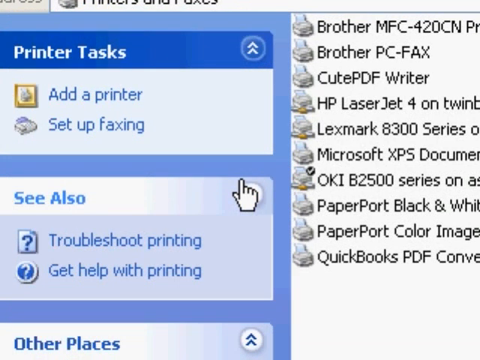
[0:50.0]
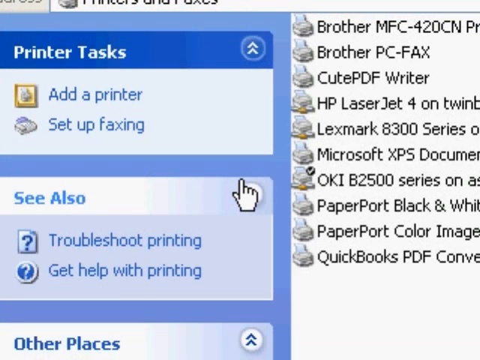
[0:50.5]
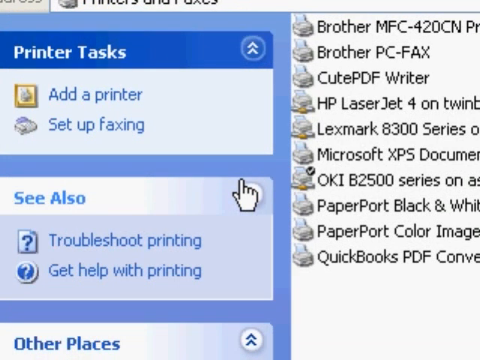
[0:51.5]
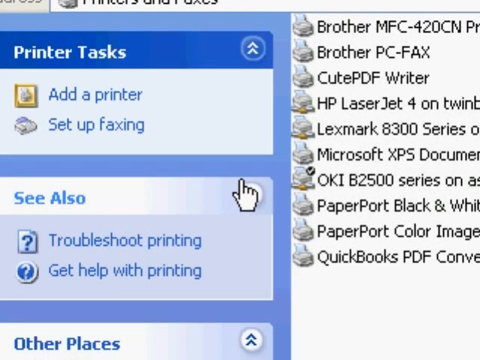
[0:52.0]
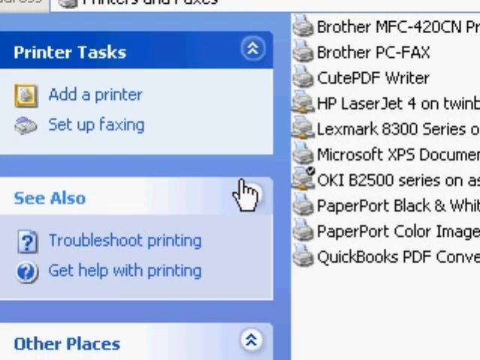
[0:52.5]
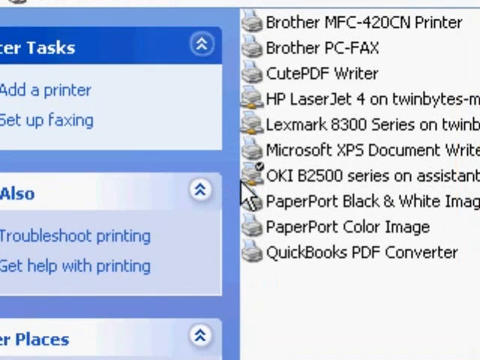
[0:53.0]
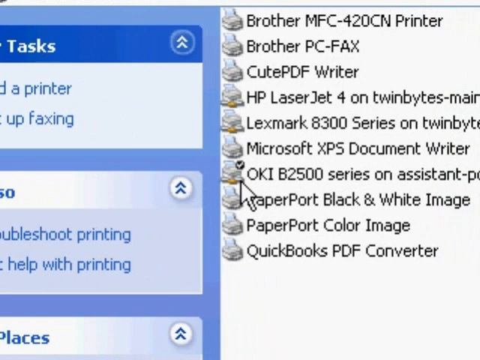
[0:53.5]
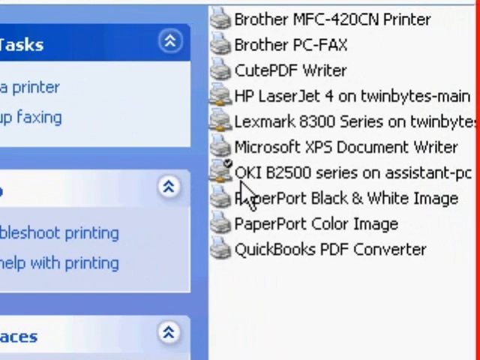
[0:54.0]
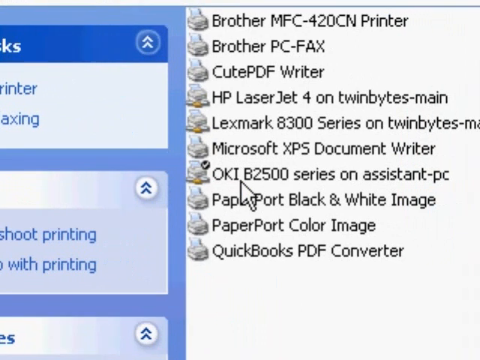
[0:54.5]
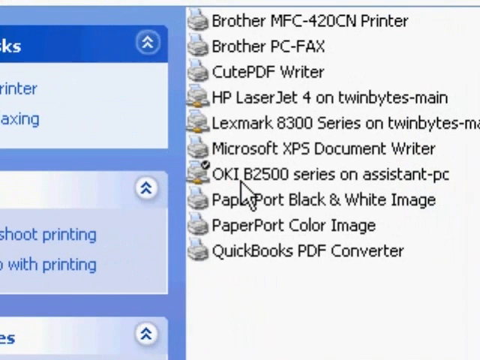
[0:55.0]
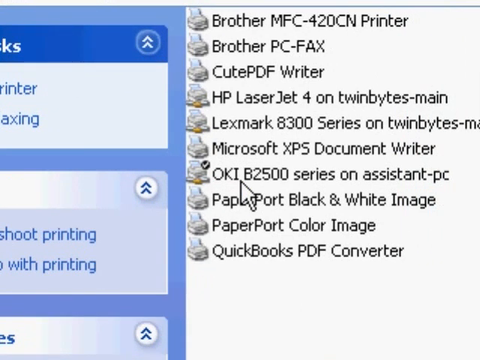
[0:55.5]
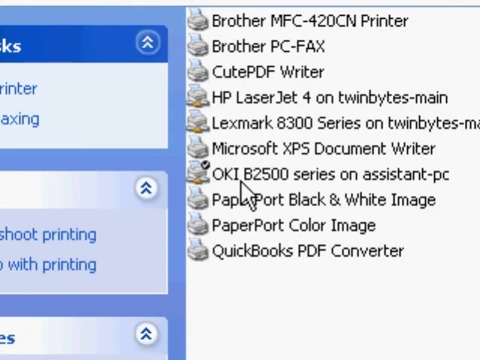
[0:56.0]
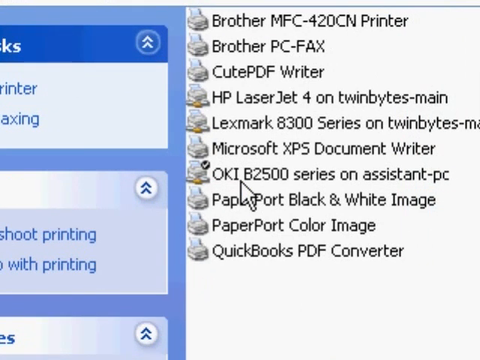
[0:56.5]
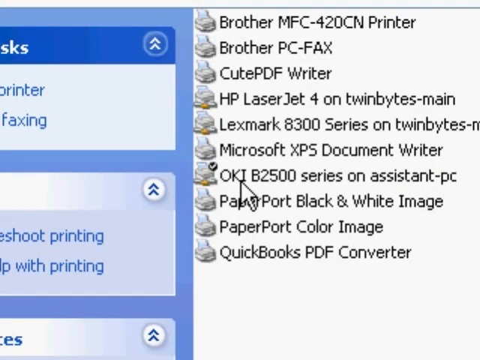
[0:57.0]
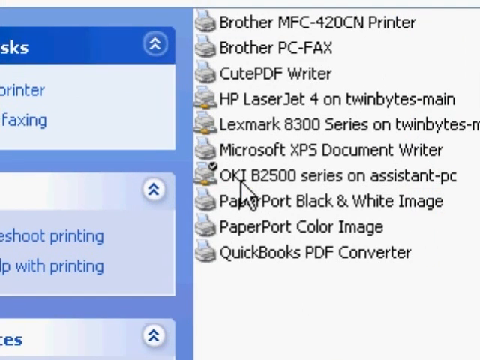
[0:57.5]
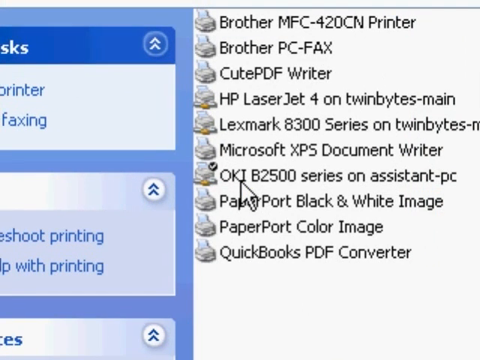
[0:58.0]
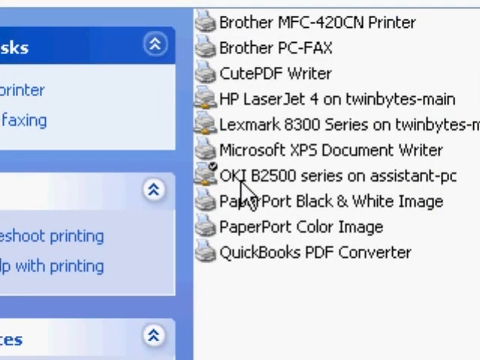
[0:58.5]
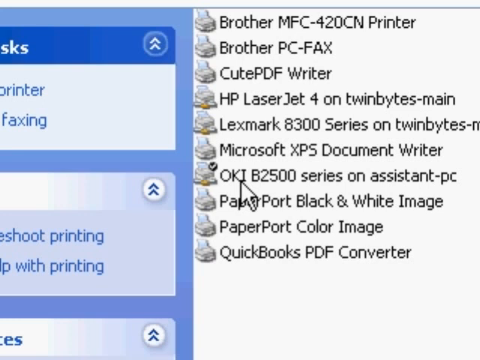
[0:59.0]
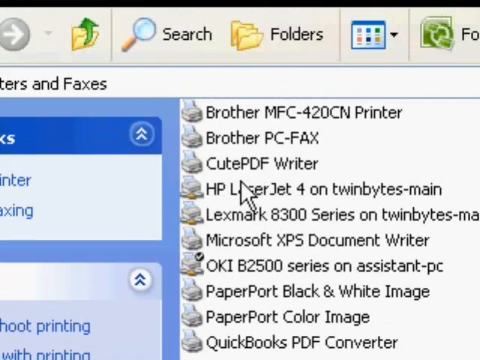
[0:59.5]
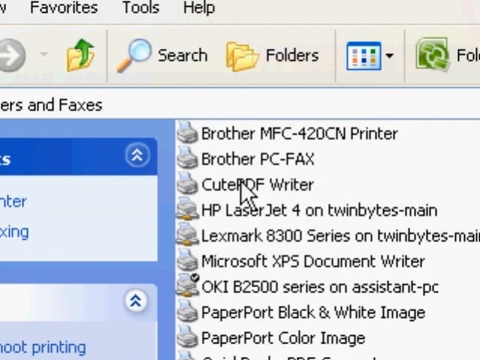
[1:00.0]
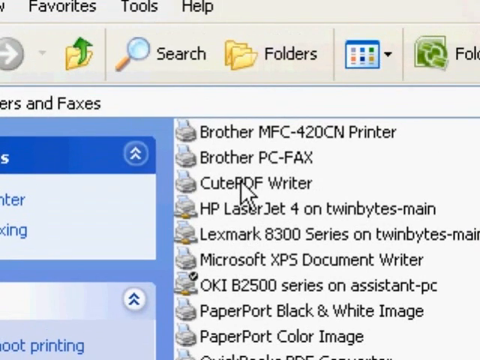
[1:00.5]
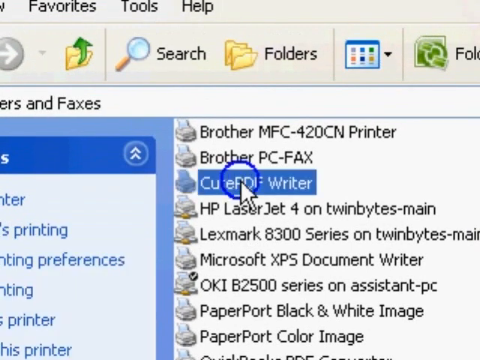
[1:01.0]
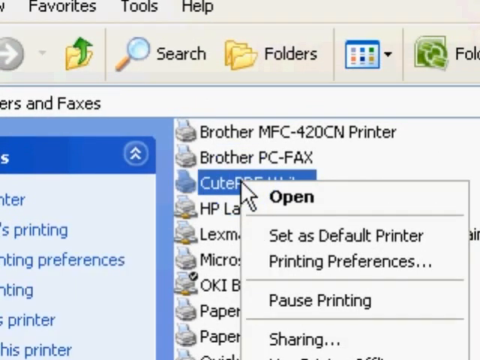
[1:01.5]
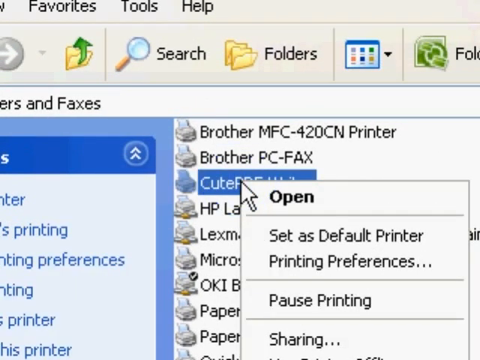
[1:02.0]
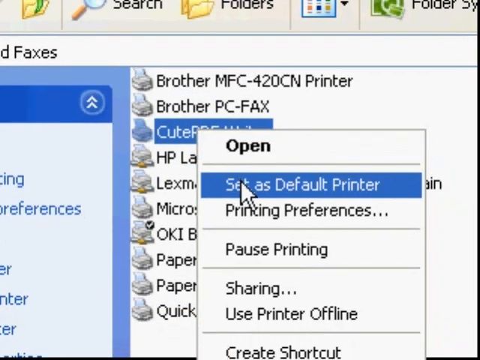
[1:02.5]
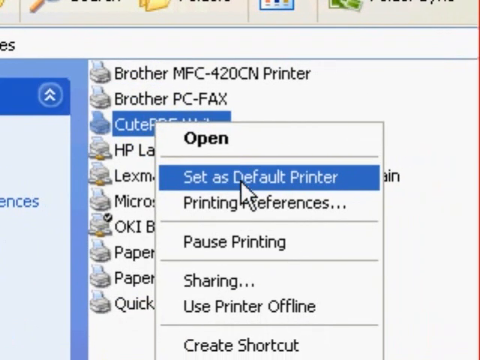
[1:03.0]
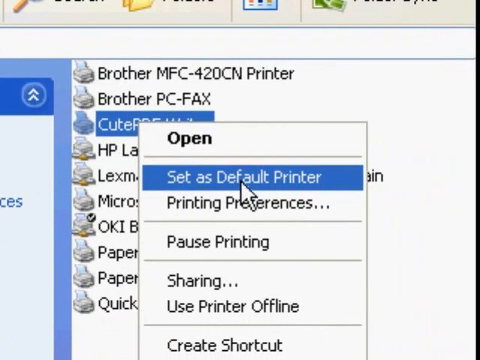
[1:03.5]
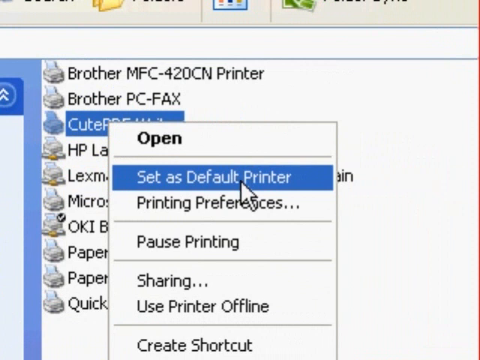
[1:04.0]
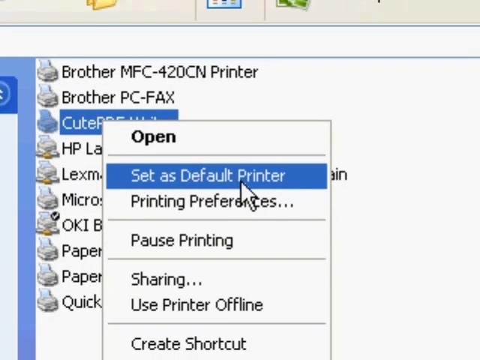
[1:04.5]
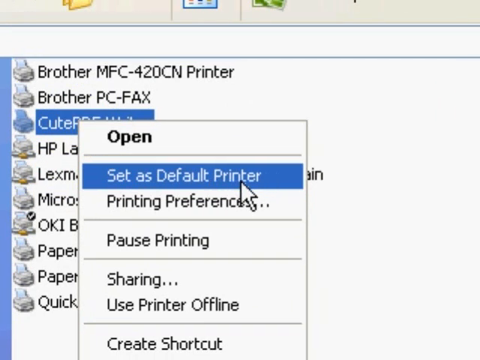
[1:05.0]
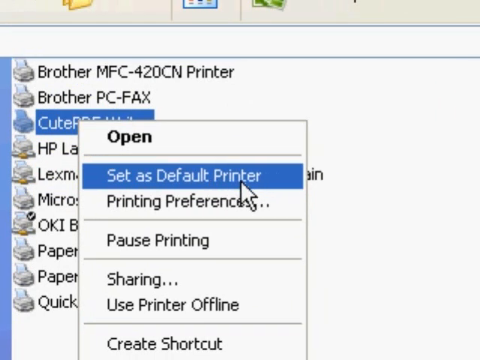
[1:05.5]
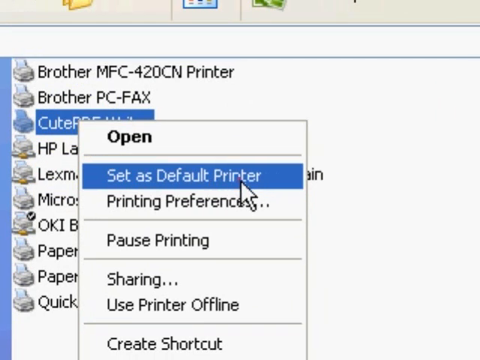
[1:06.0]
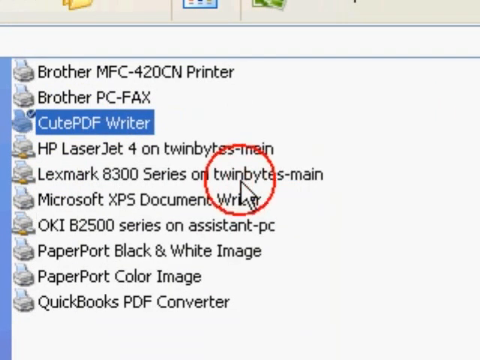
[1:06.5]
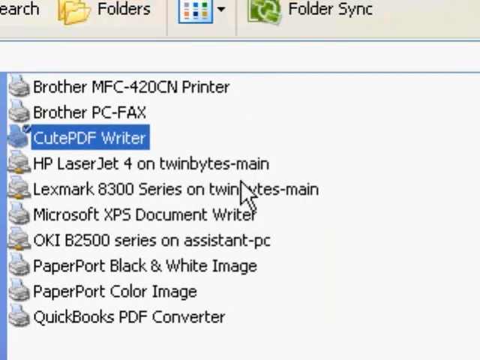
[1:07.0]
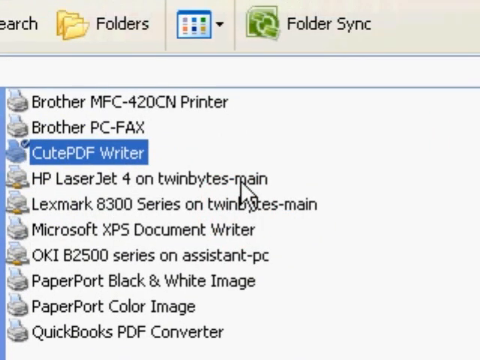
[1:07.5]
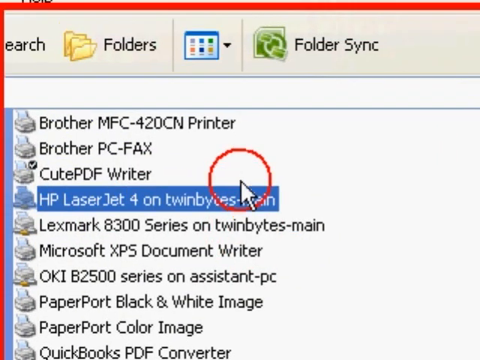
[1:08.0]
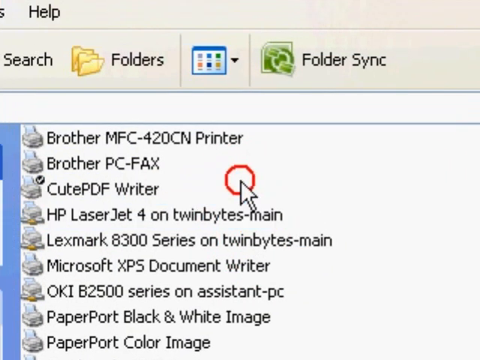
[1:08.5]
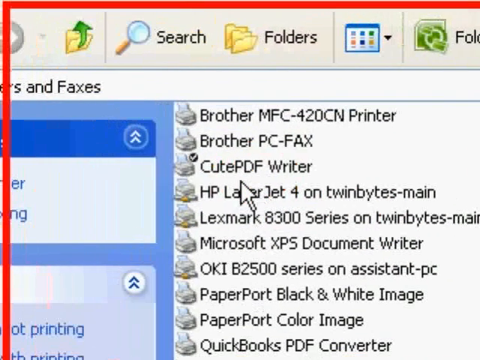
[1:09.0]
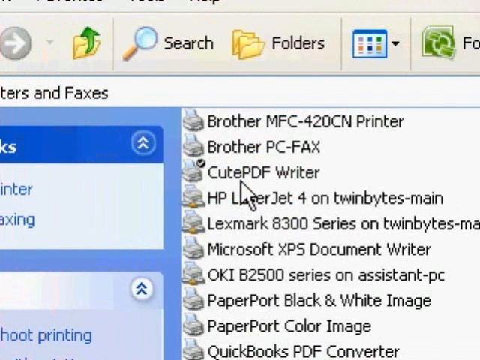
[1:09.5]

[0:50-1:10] A close-up of a Windows PC monitor shows the printer section. In the left border are printer tasks: "add a printer" and "set up faxing". Beneath that is "see also", with "troubleshoot printing" and "get help with printing". A cursor in the middle of the page moves over to a list of printers and other icons. The cursor clicks on a link, and a printer is set as the default printer. Several other printers are listed, as well as converters and color image tools.